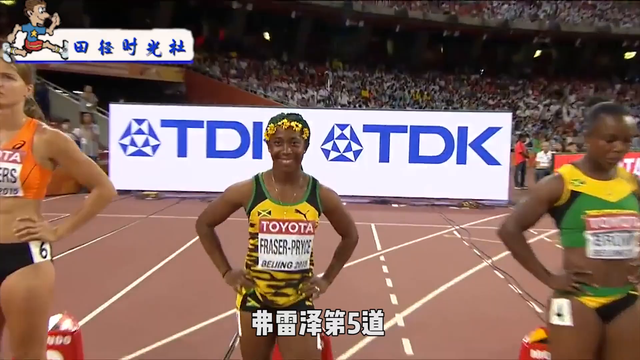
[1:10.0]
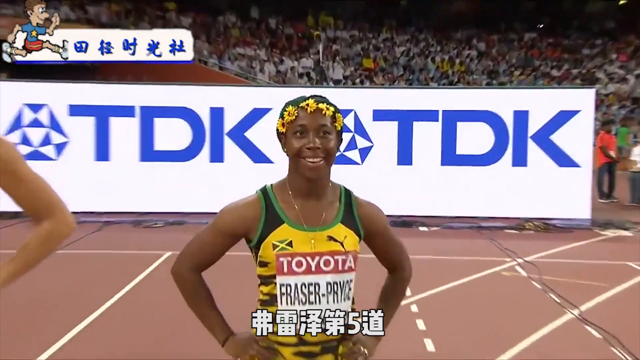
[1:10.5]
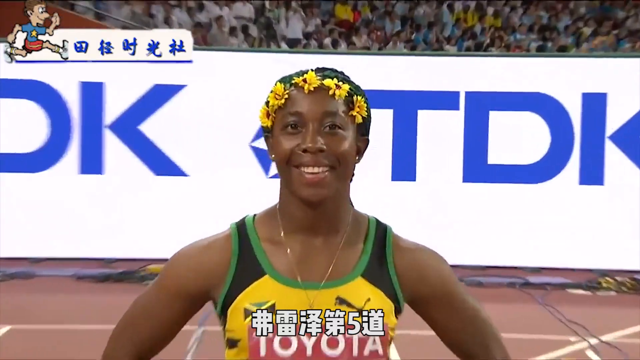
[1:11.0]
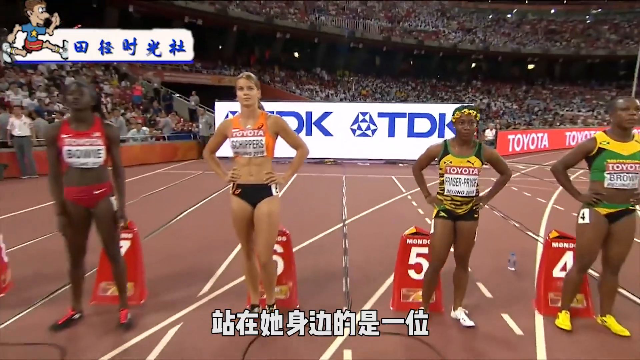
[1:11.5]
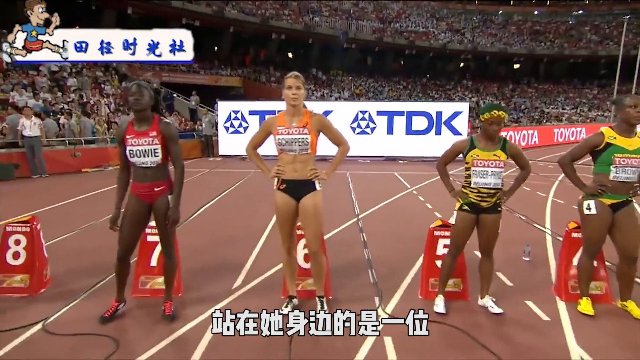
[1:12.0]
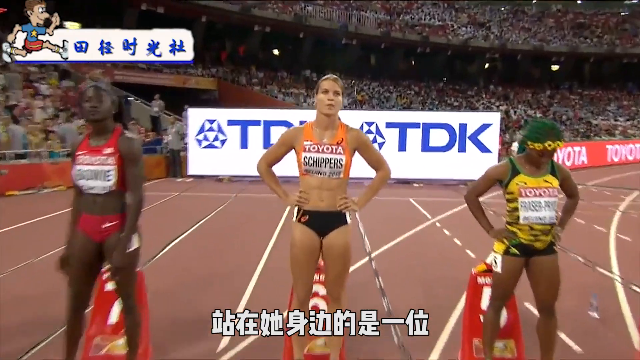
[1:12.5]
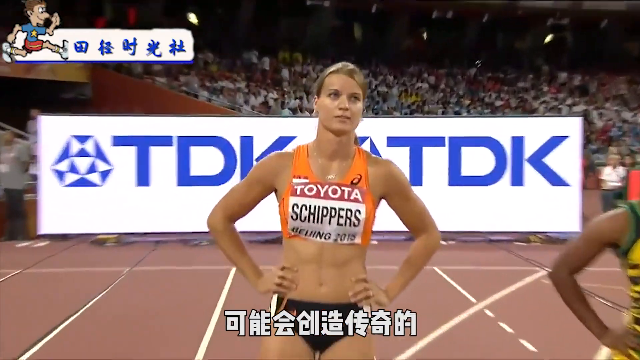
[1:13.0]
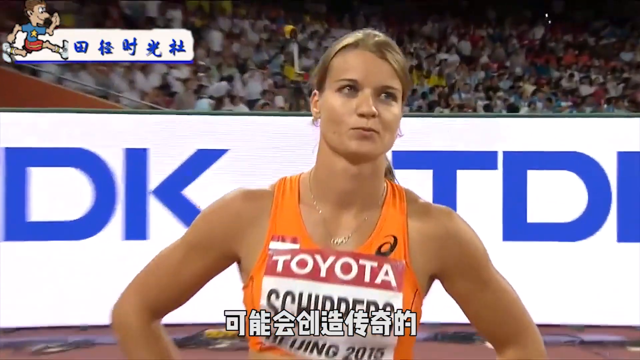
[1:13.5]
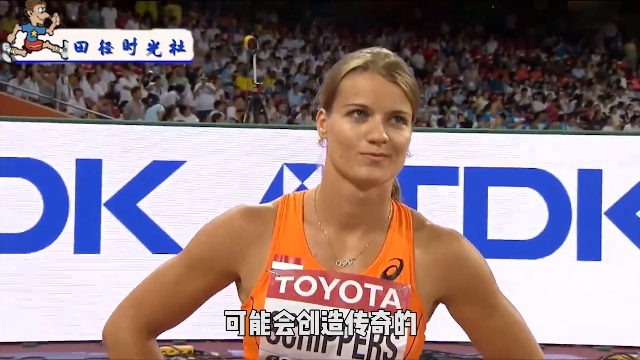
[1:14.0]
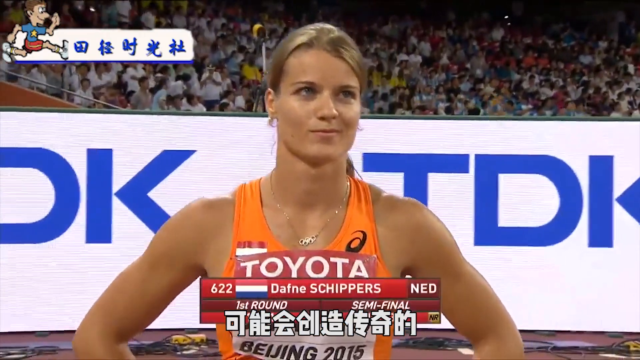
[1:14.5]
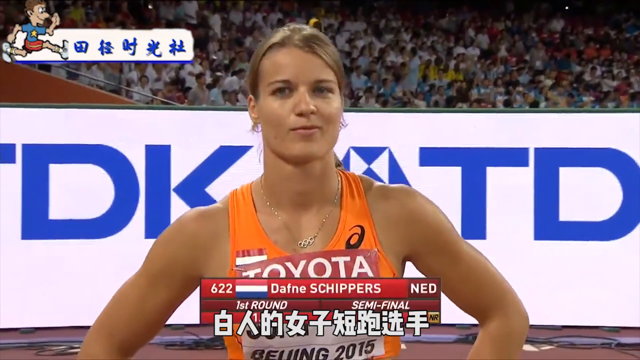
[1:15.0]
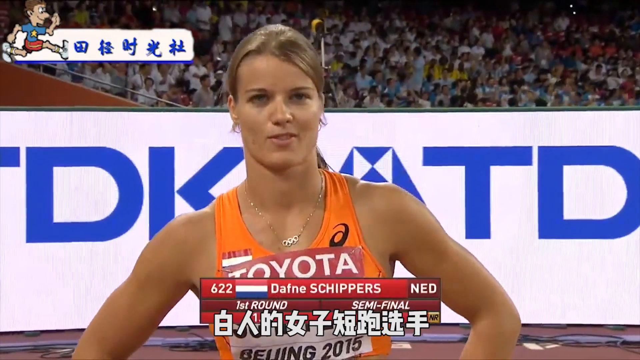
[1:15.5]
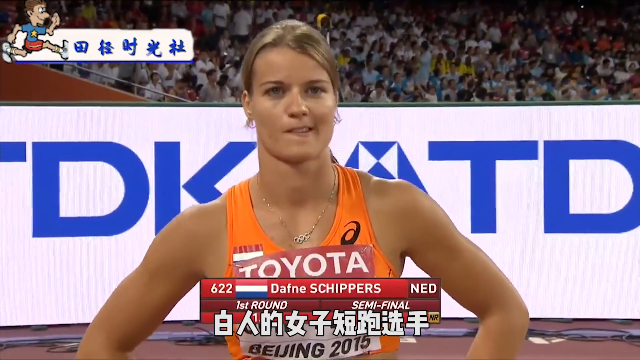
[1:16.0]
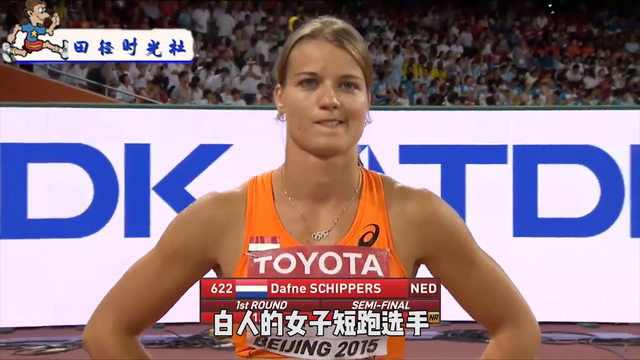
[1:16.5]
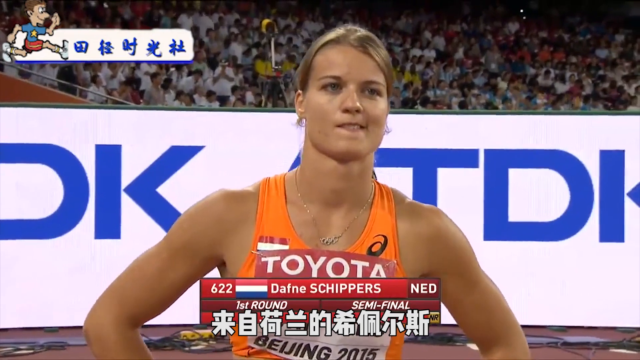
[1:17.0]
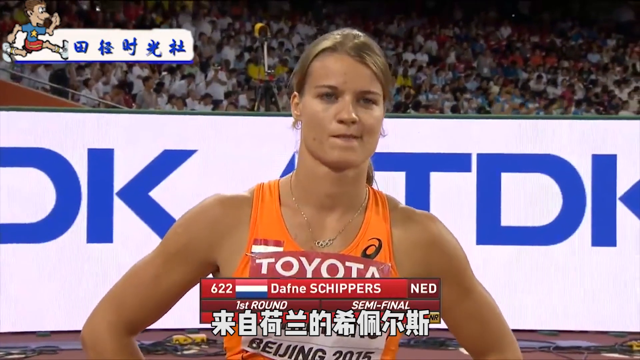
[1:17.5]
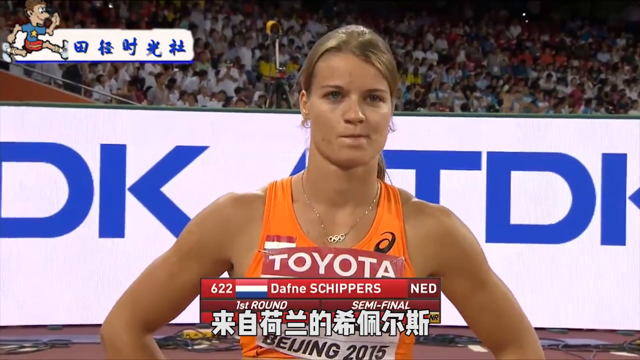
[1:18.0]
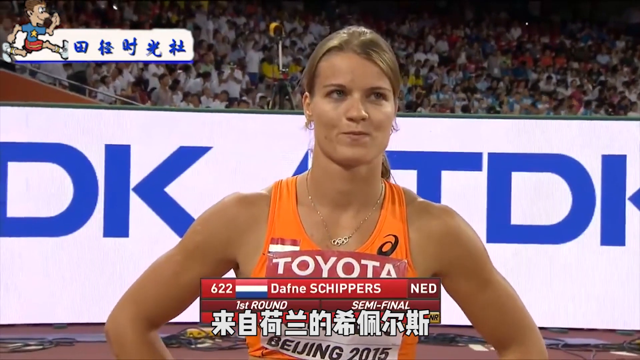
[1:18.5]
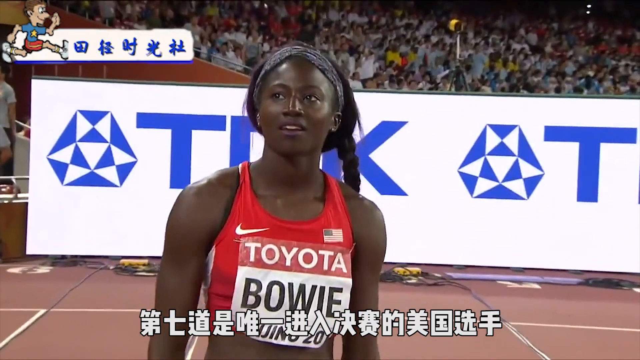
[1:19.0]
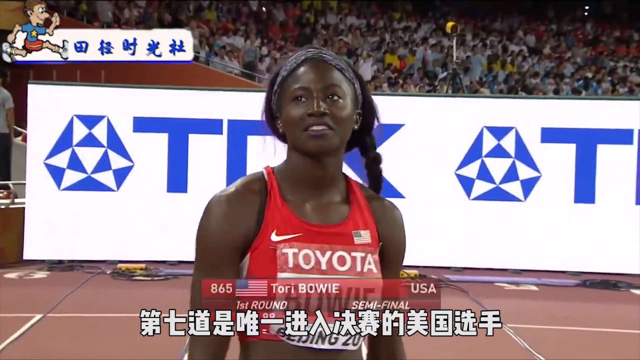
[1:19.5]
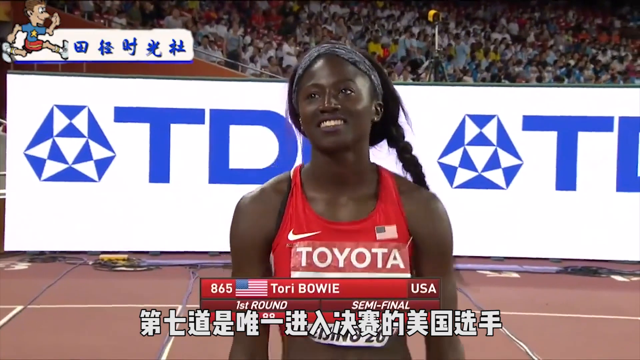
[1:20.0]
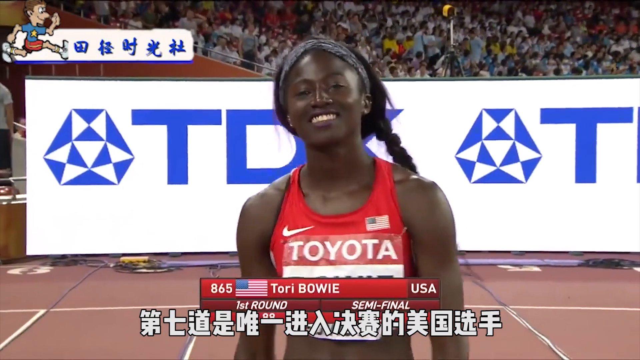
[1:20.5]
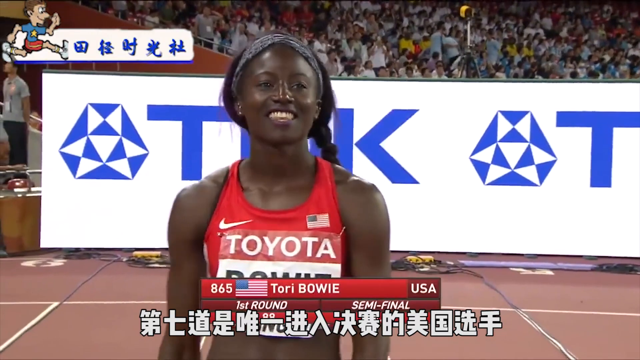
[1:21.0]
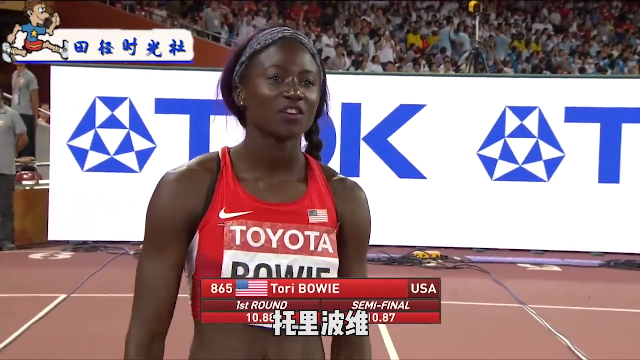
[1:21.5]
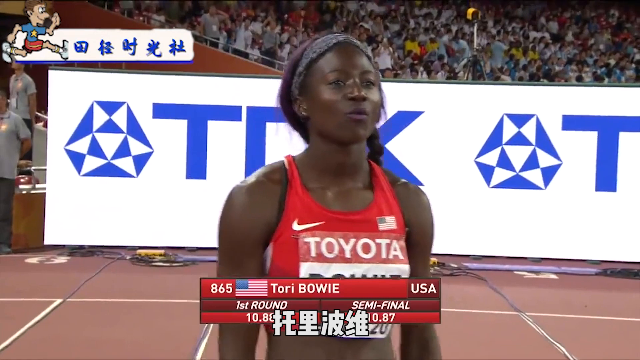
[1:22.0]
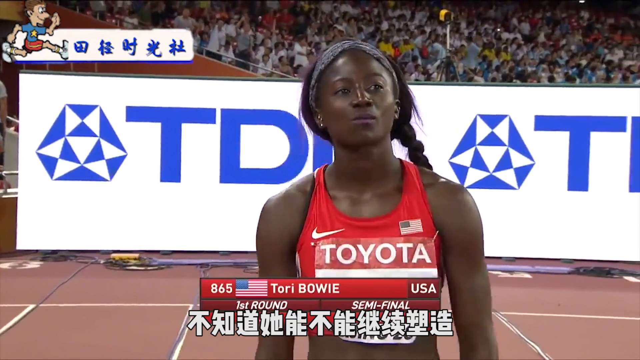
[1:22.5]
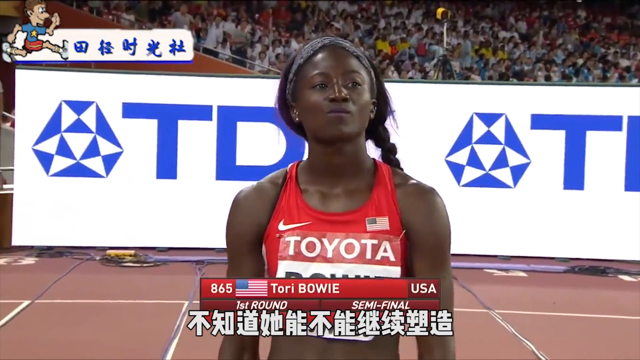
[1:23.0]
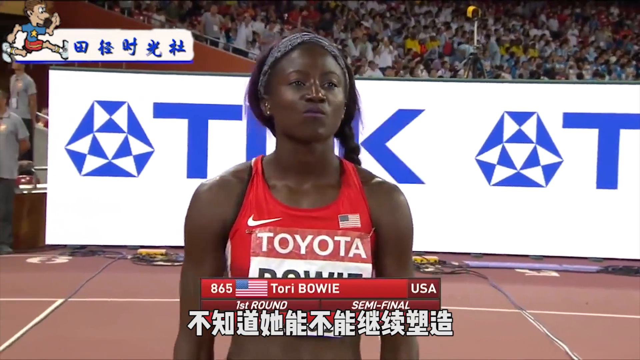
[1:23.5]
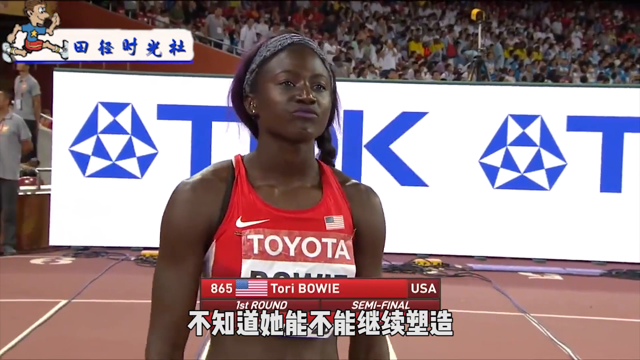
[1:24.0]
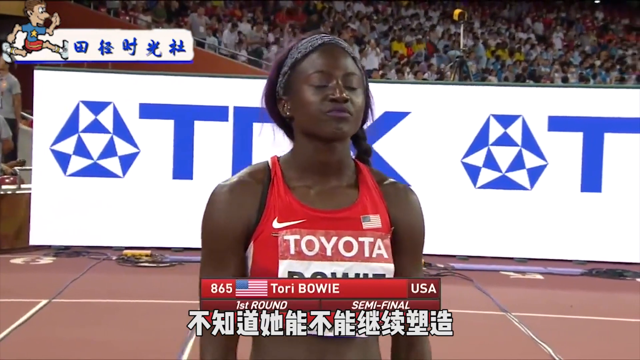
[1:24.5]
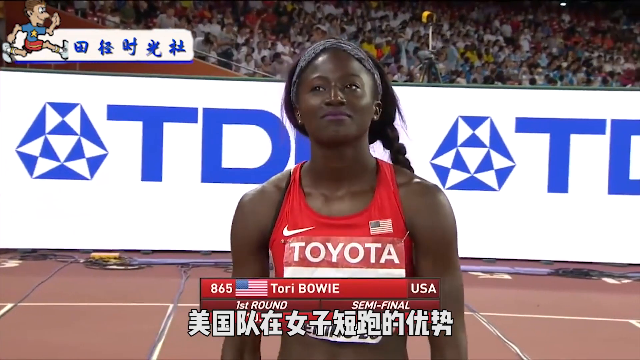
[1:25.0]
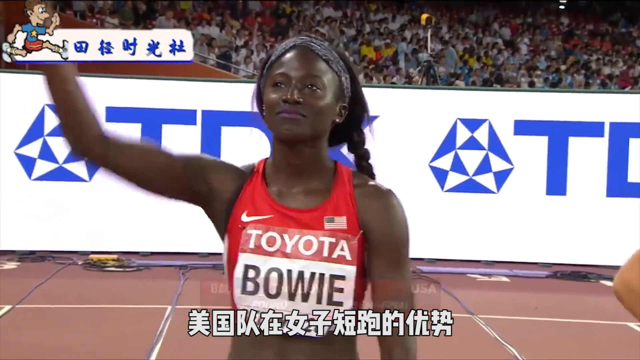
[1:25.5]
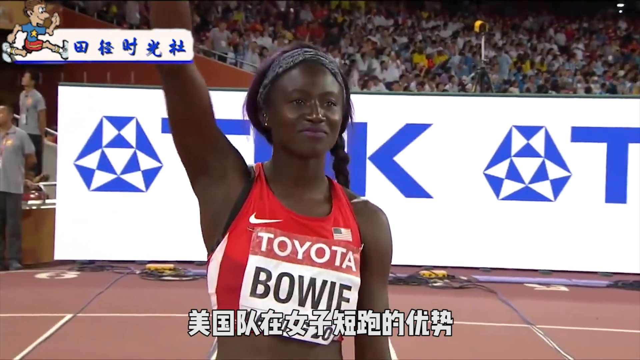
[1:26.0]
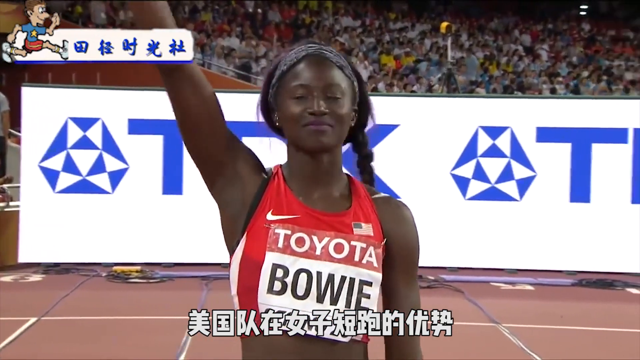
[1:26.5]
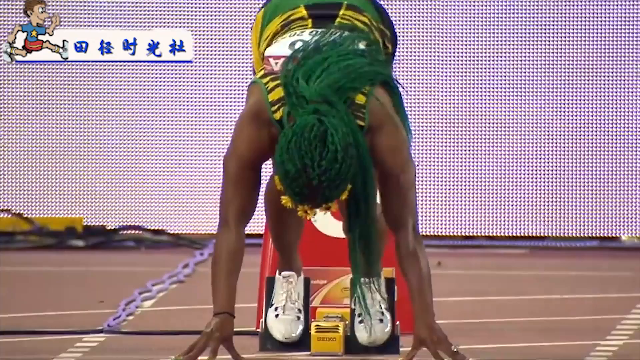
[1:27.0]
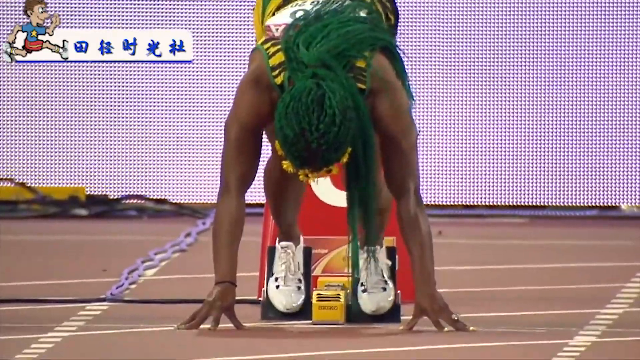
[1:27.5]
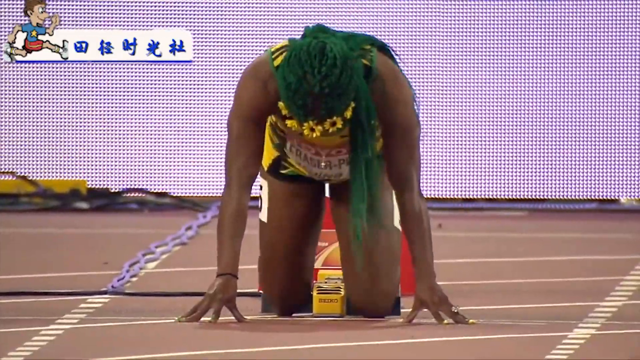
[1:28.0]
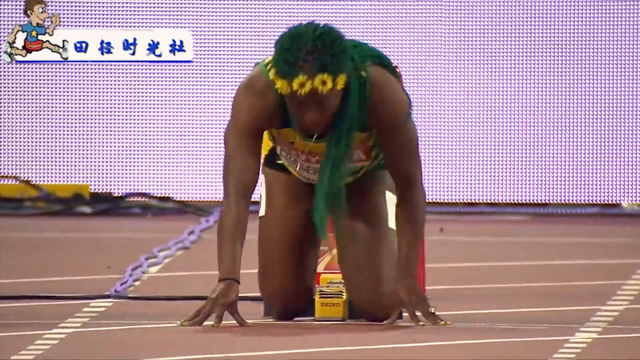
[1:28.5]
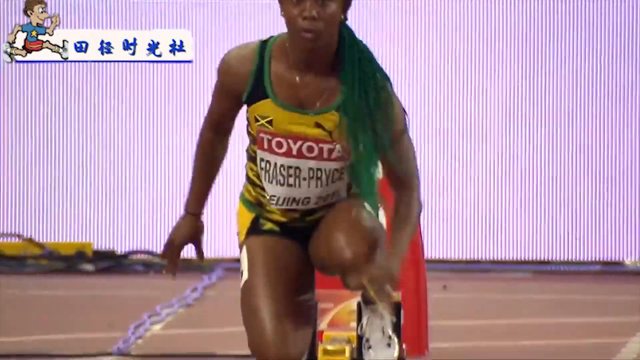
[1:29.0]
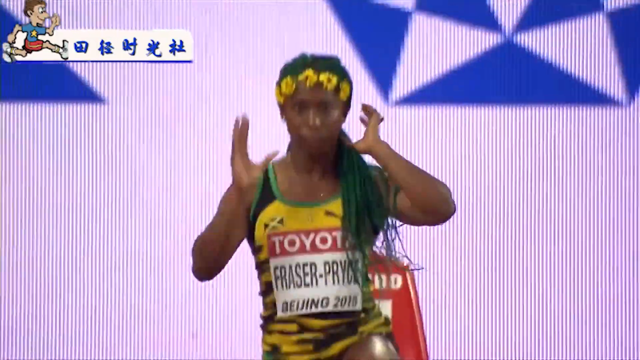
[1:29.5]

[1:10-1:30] A still photo shows three women competitors in another sprint contest. The one in focus has flowers around her head and might be from Jamaica. The camera moves in to a close-up of her face, then to close-ups of other contestants: a tall, dark blondish woman in an orange vest, and then a contestant identified as Tori Bowie from the USA, a Black woman with her hair in a braided ponytail. The camera stays on her for a bit as she raises her hand and waves. The competitors then settle into their blocks in their starting crouch, feet positioned in the starting blocks.